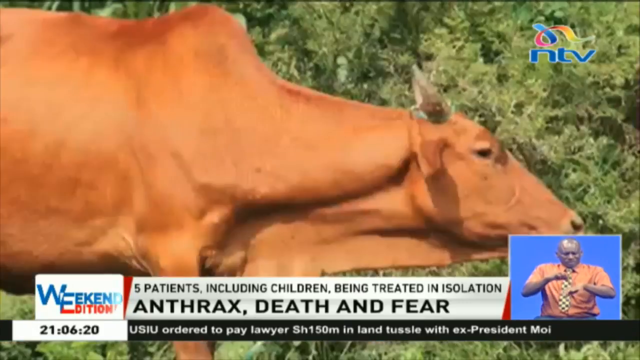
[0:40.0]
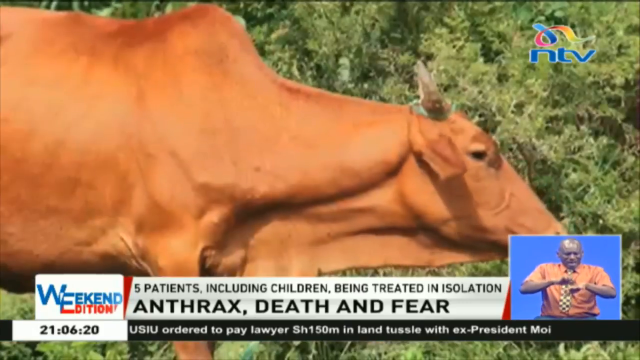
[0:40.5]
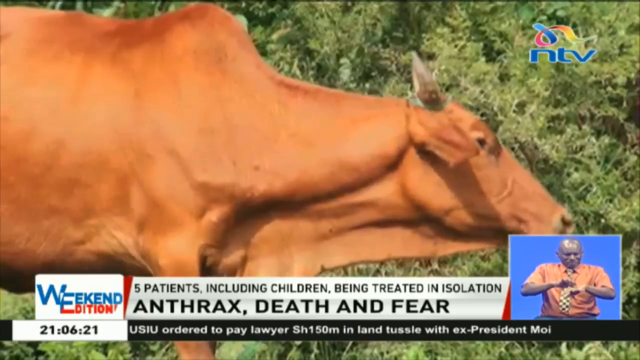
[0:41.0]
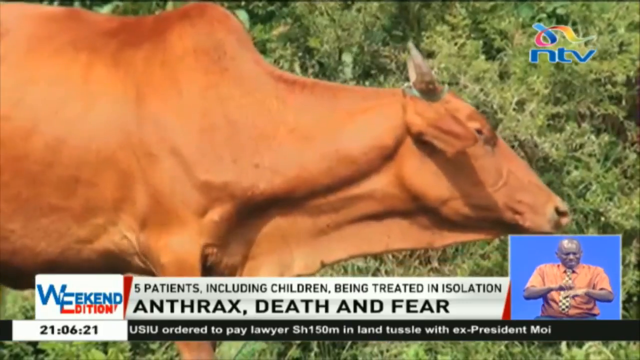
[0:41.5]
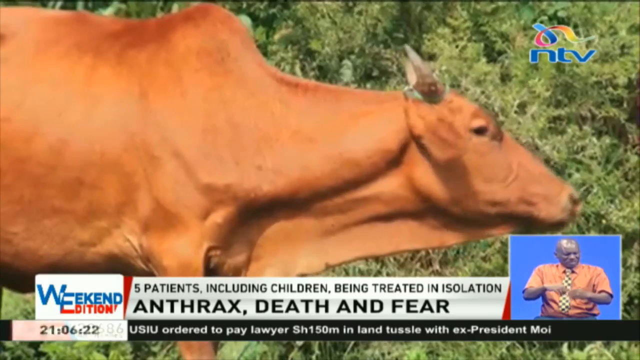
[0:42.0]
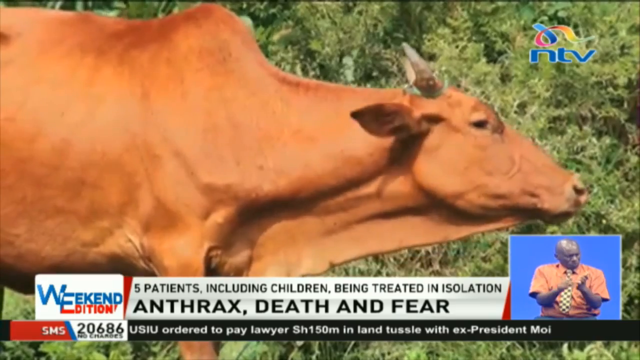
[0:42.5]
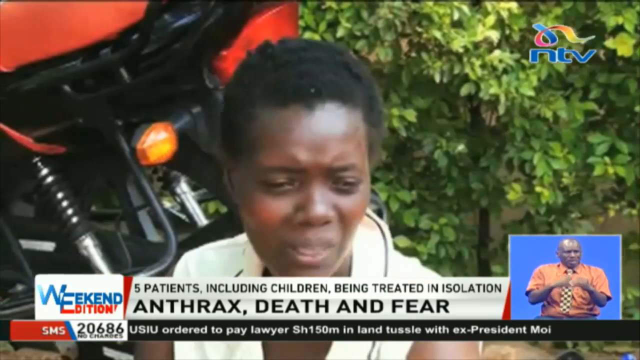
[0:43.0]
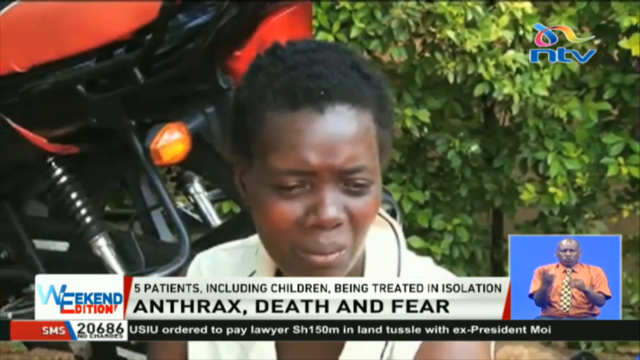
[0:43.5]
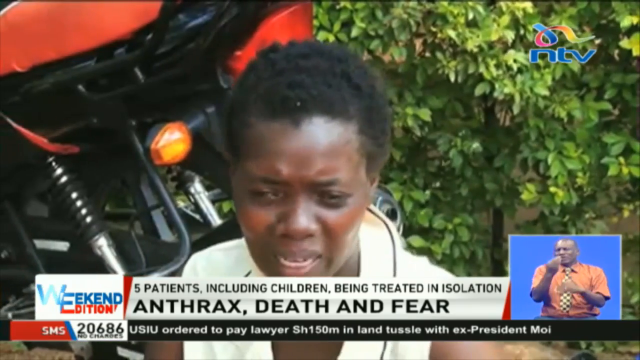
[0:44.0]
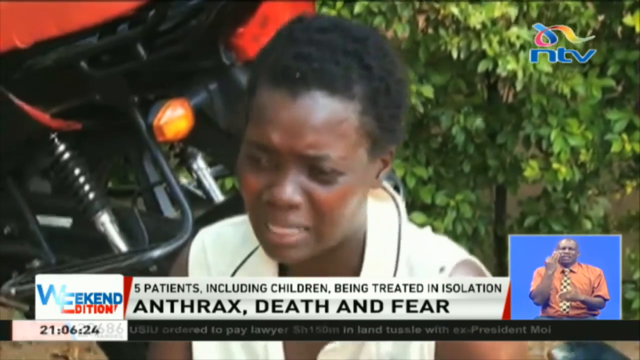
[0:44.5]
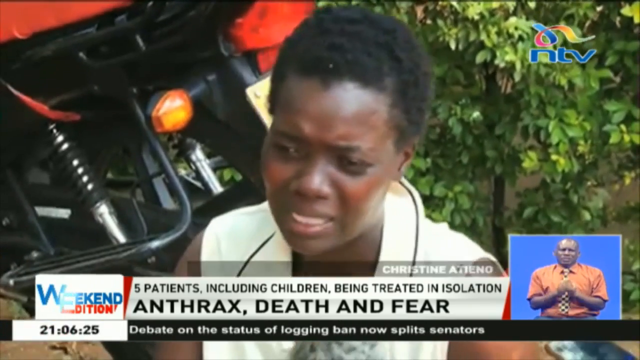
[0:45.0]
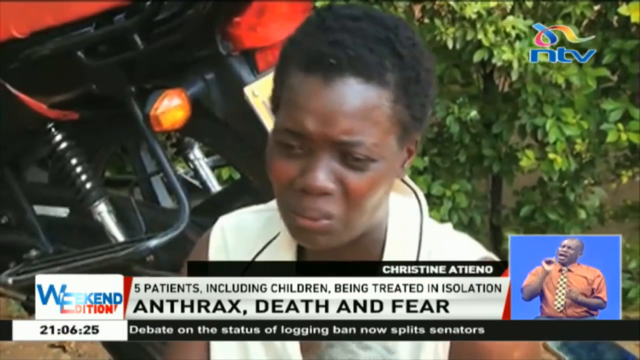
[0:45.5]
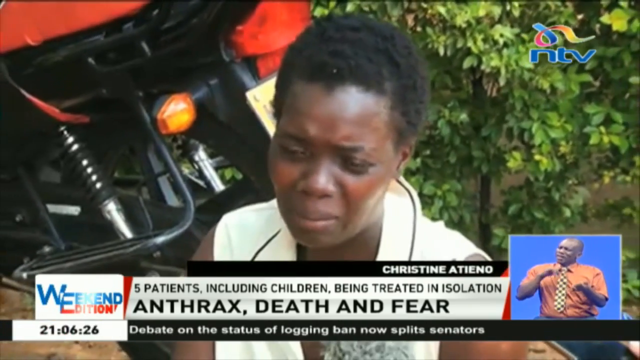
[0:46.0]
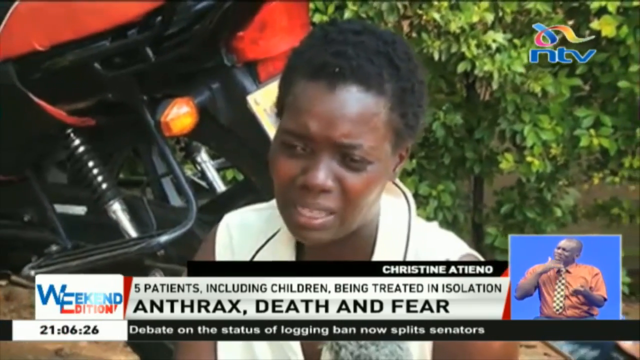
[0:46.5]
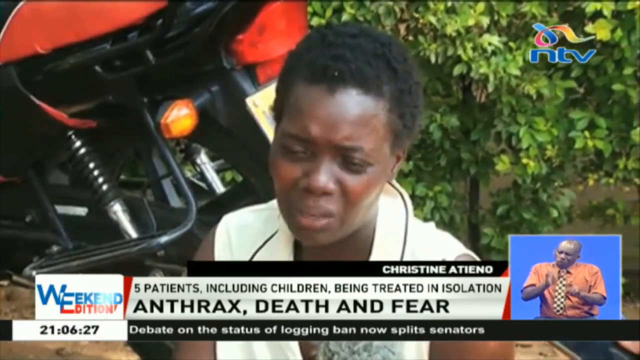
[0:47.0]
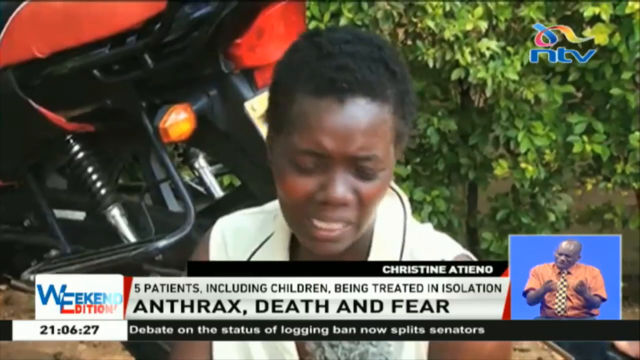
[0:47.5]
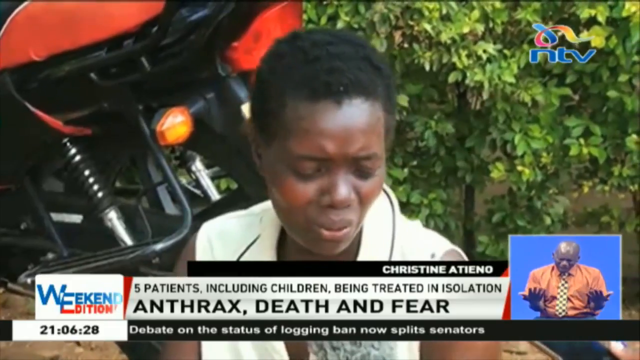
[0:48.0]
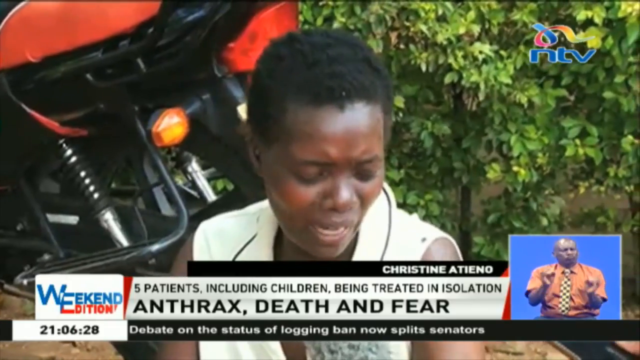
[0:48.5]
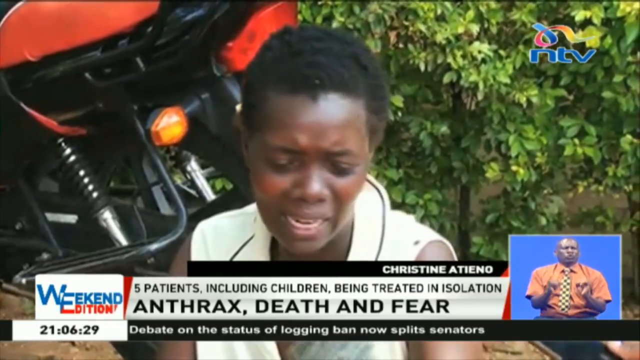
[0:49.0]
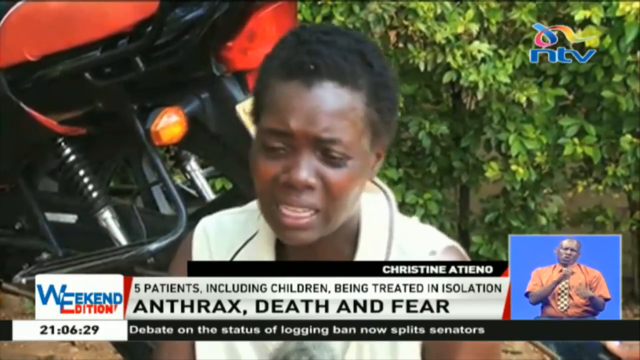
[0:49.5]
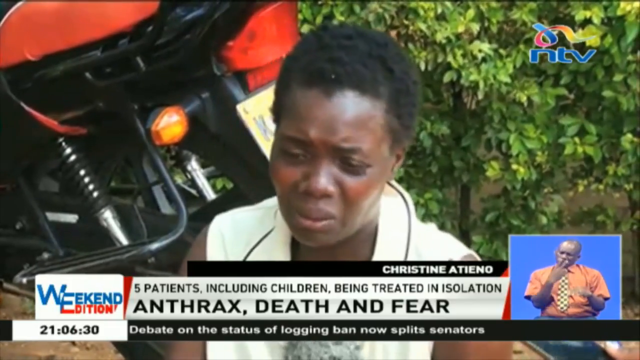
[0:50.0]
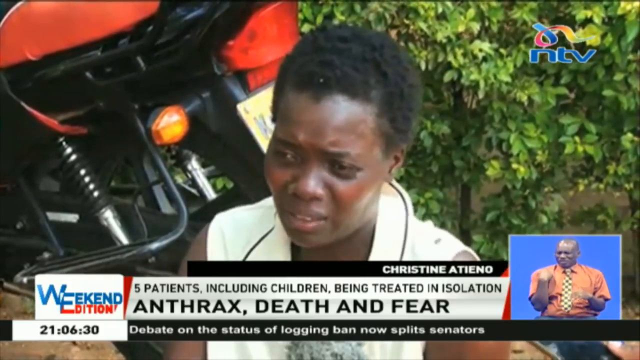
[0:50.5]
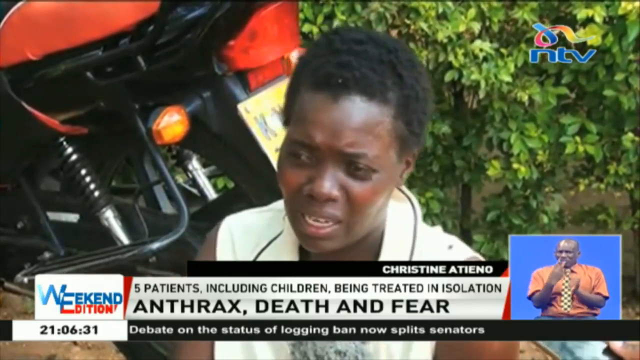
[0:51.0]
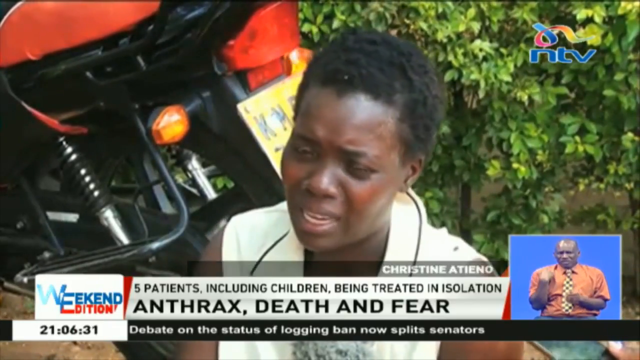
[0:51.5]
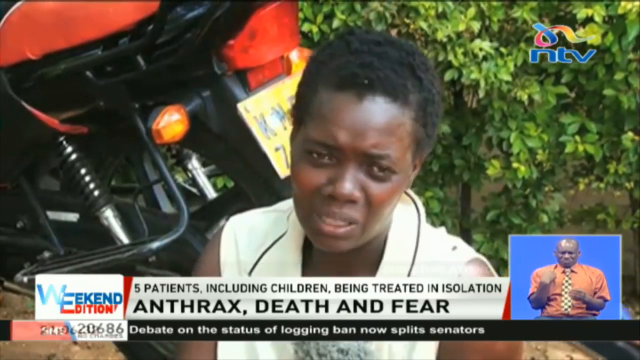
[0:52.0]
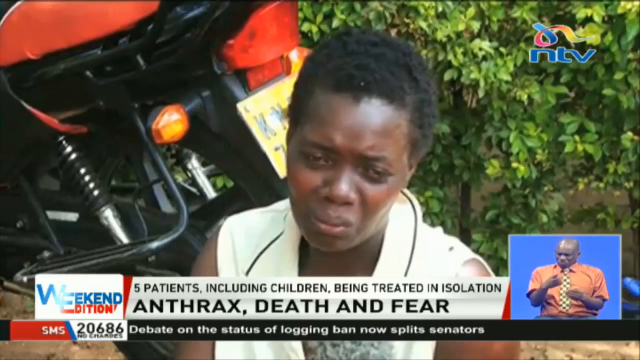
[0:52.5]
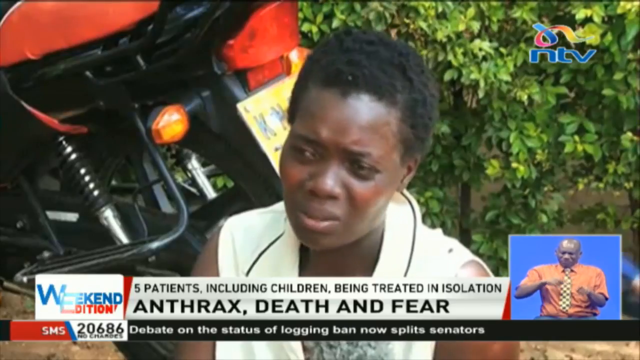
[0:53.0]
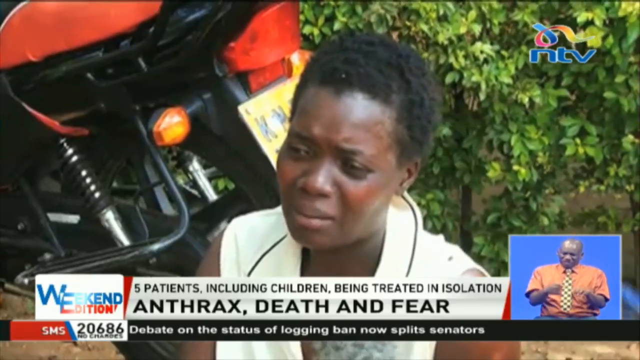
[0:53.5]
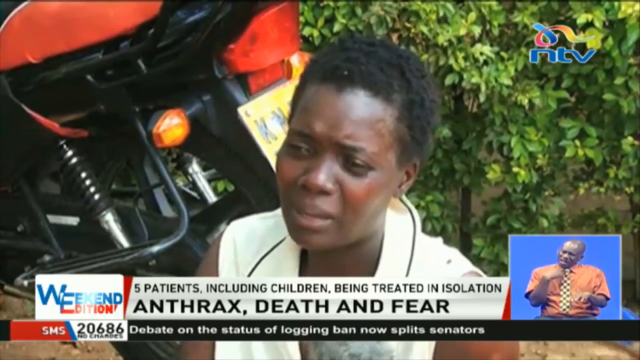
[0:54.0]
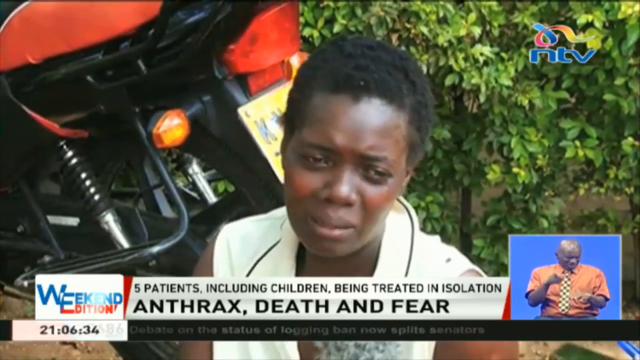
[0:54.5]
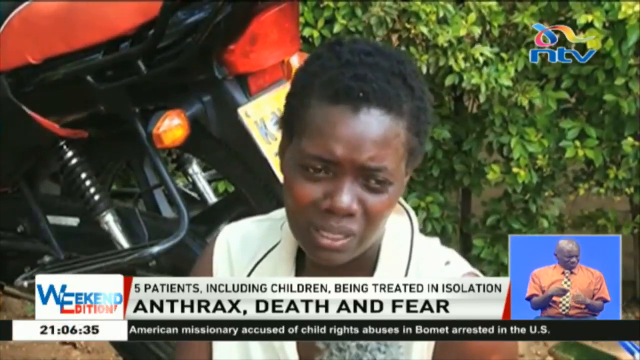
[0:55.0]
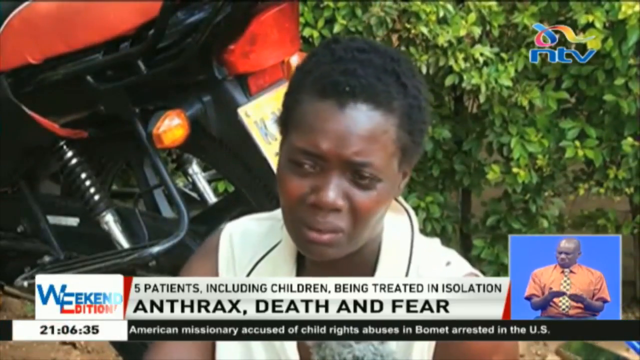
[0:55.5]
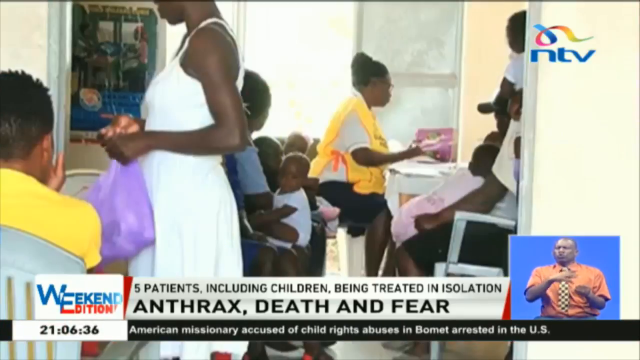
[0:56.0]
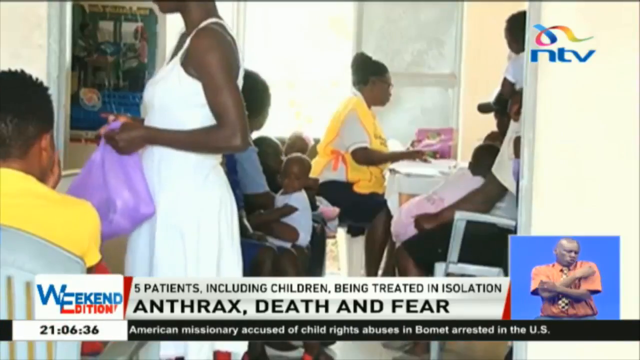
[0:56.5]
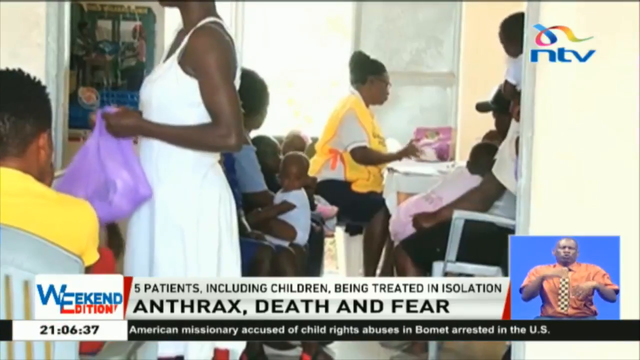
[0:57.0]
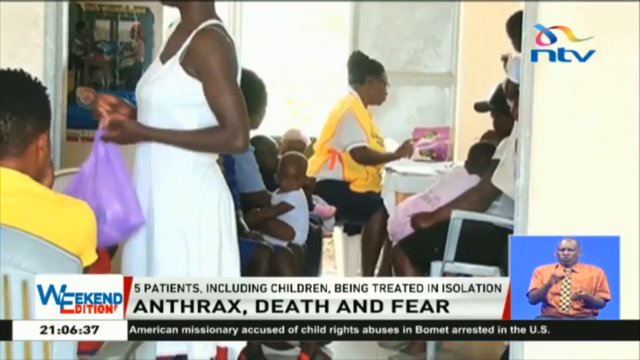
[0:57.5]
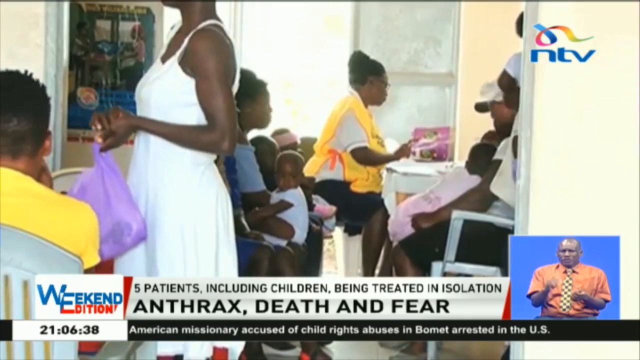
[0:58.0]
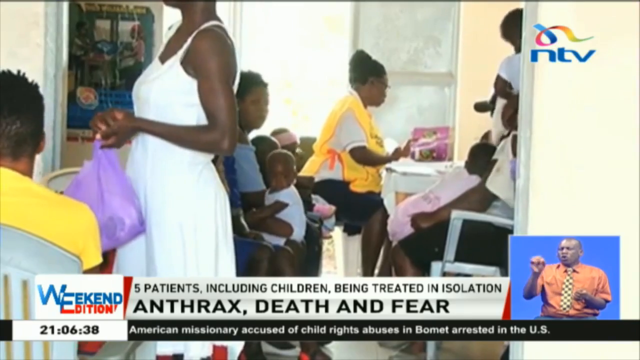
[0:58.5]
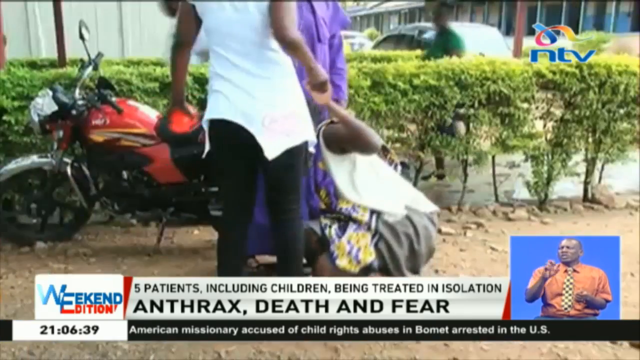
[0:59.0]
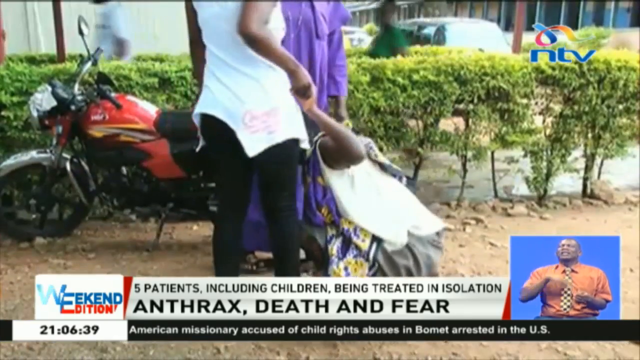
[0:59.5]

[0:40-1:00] A large brown cow is seen from the side, kind of standing there. A close-up shows an African woman with short black hair sitting on the ground next to a motorcycle, looking very upset as she speaks to the reporter interviewing her. A black pop-up box at the bottom of the screen reads "Christine Atieno", with a white rectangular box underneath reading "five patients, including children, being treated in isolation", and below that "anthrax, death, and fear". Another scene inside a bright room shows a few women and lots of small children sitting on chairs; it seems to be a waiting room of some sort. Then a few women stand outside; one woman is kneeling and another grabs her hand and helps her off the ground.